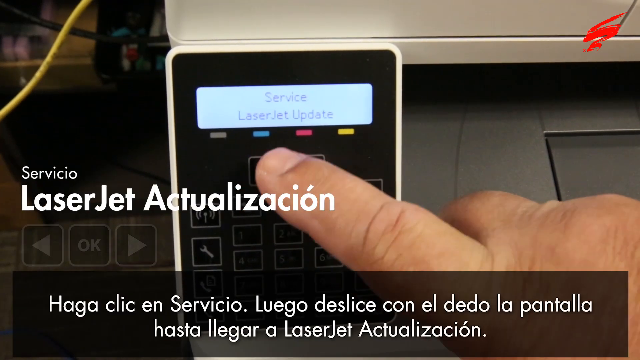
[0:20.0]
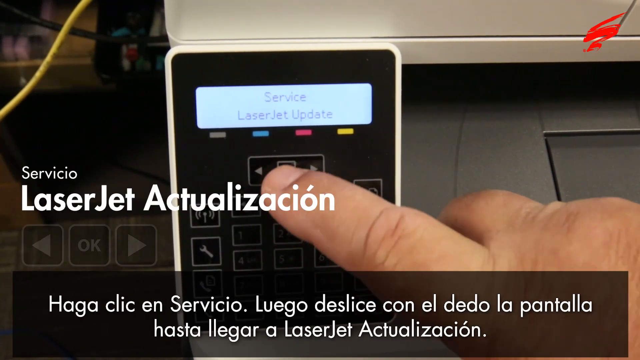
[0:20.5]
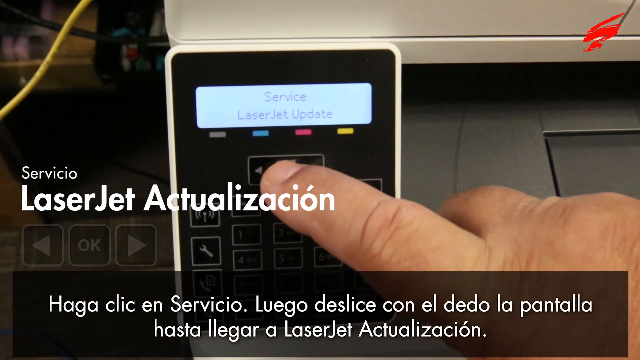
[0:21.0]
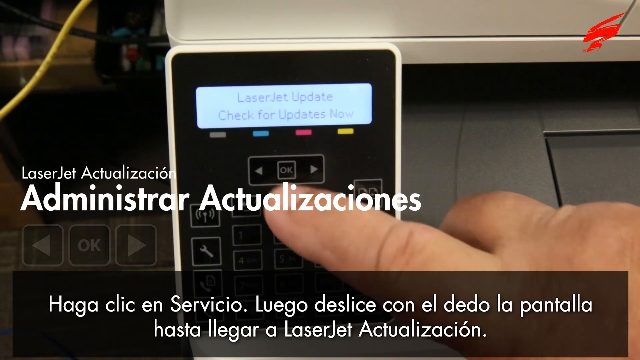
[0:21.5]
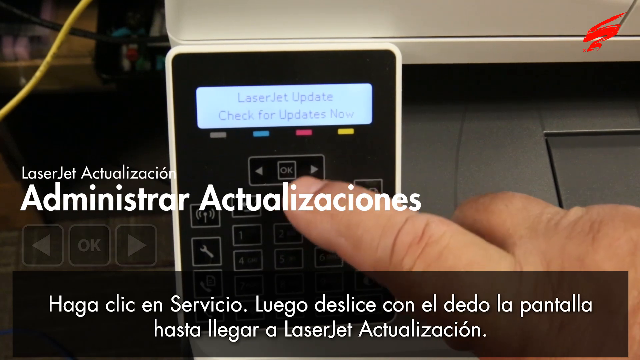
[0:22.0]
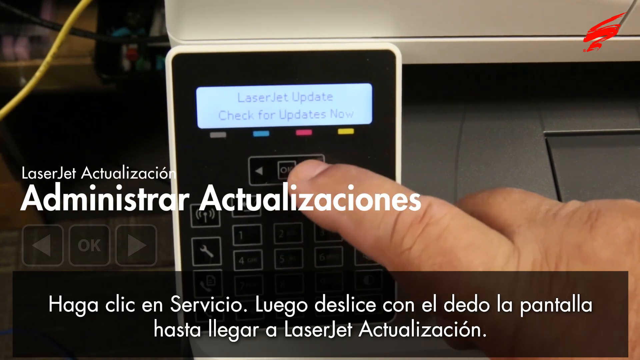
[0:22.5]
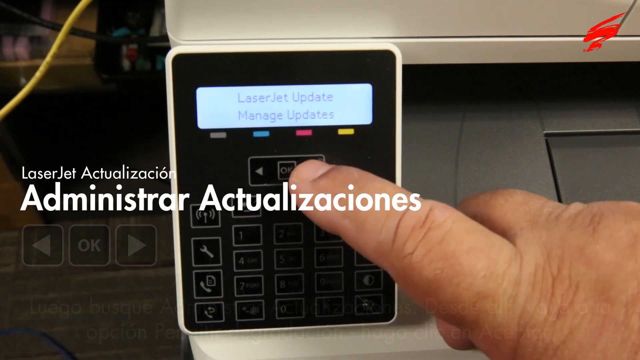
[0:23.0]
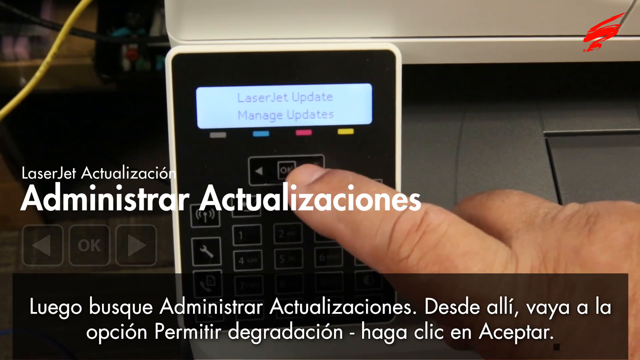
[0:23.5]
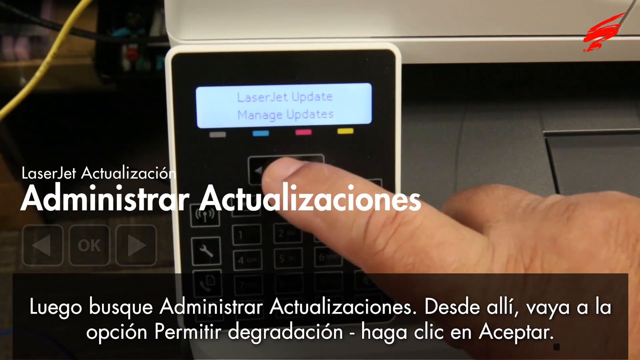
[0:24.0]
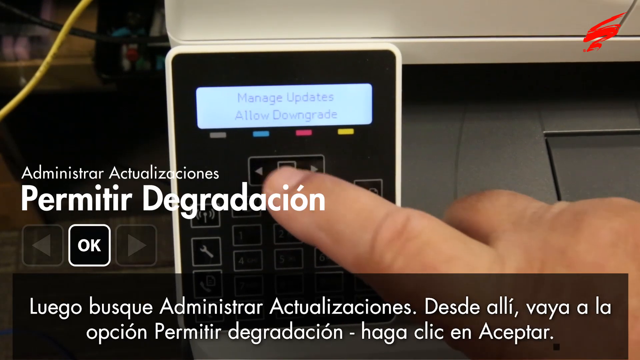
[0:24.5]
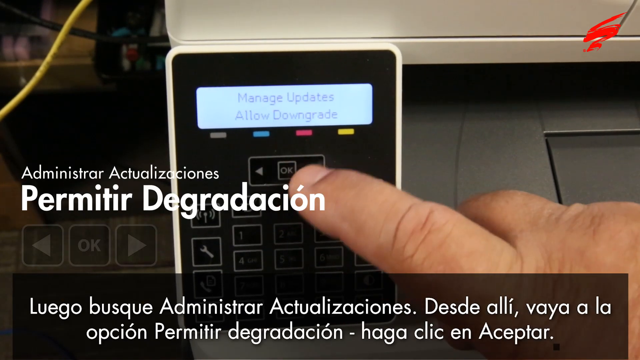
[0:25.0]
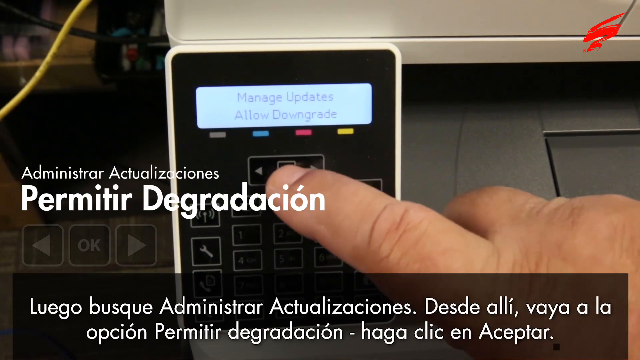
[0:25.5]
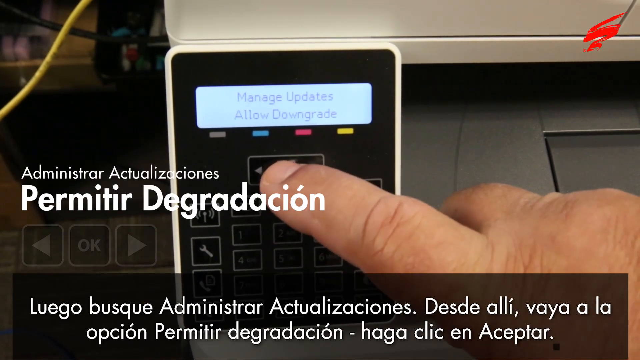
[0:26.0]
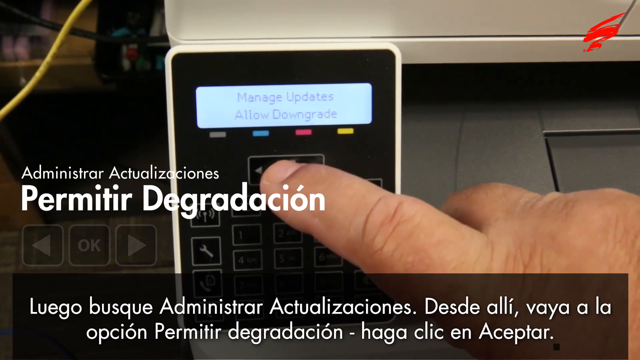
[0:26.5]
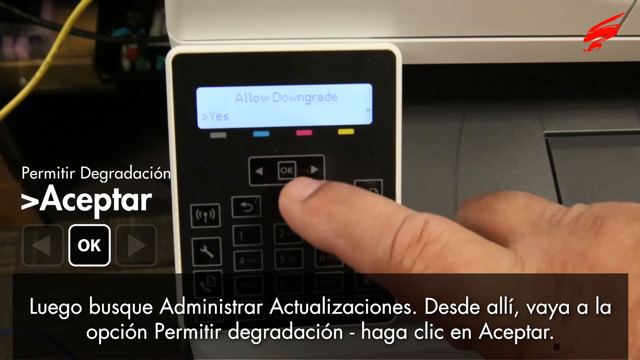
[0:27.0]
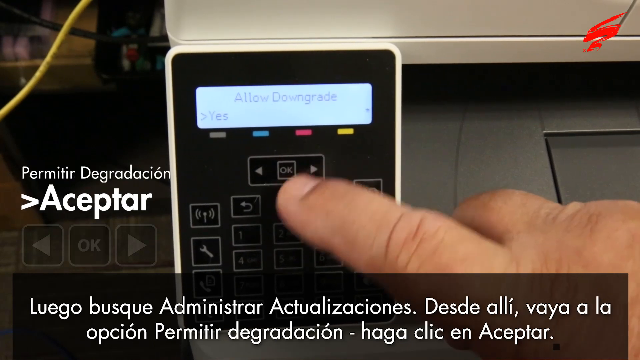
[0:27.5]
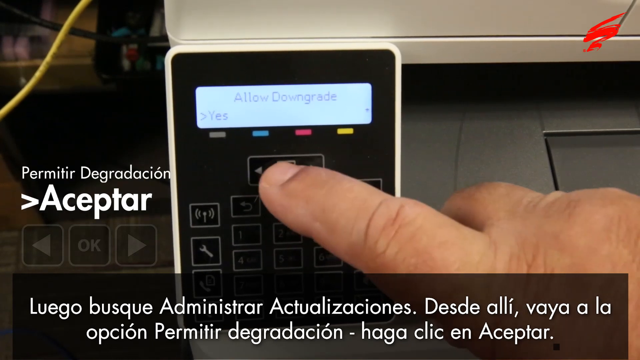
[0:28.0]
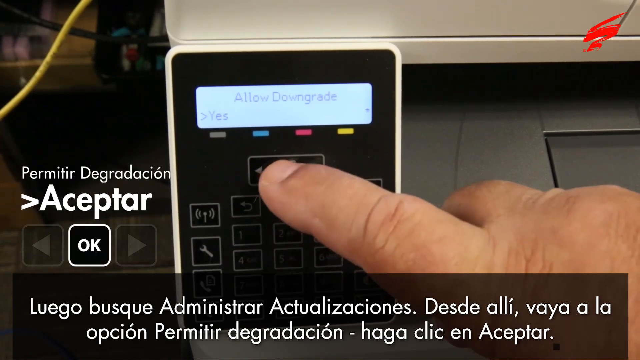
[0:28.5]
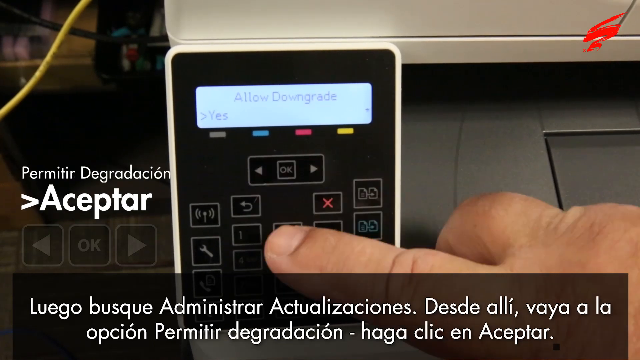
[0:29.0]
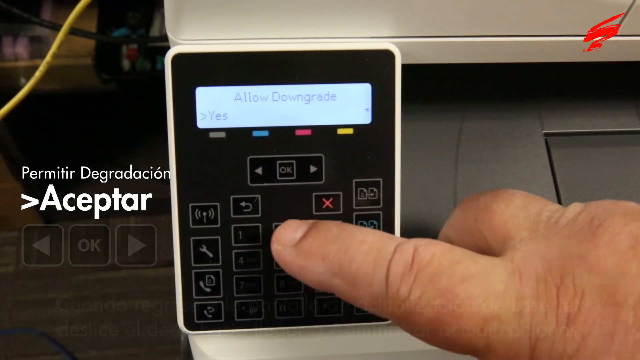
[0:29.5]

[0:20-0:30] The person continues clicking around on the device, going to menu items such as "manage updates", "allow downgrade", "Service" and "laserjet update". The device's purpose is unclear; it somewhat resembles something used with a register, though apparently not one, and is almost like a copy machine, something related to businesses. The actions seem to center on updates, possibly on how to downgrade after an update error.